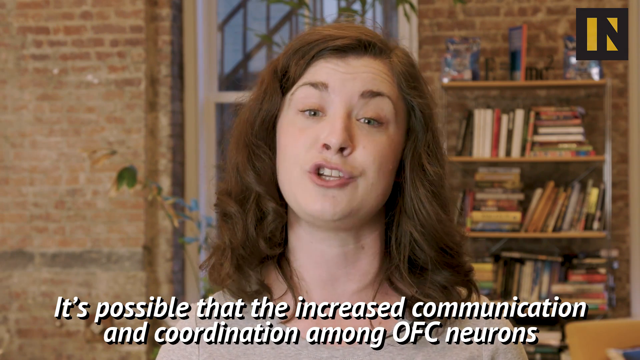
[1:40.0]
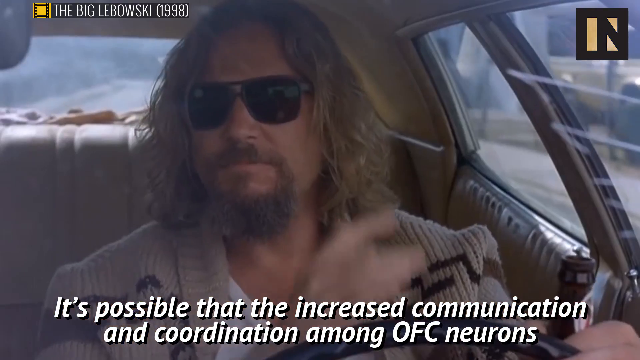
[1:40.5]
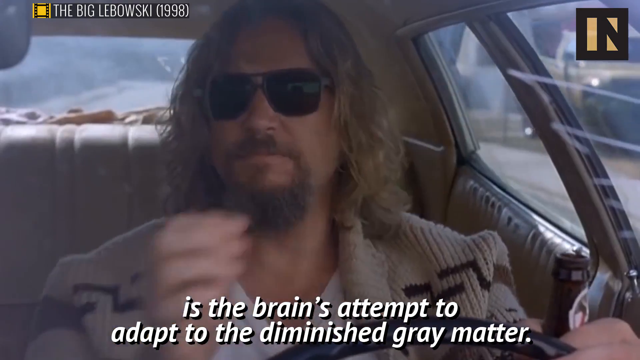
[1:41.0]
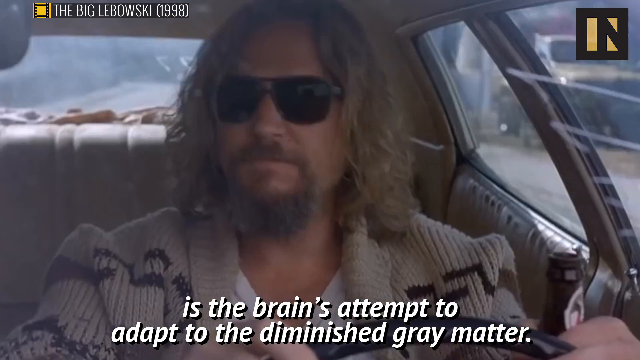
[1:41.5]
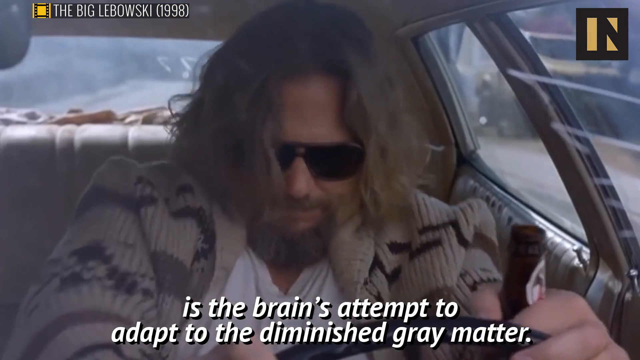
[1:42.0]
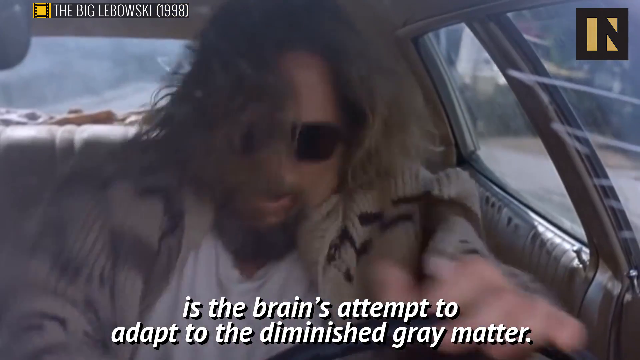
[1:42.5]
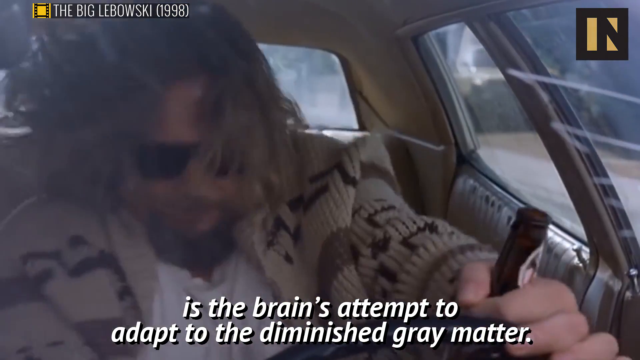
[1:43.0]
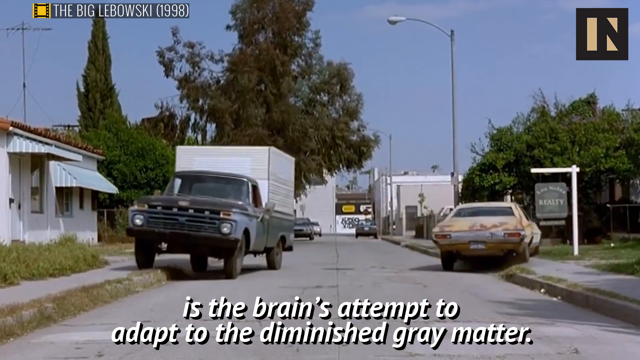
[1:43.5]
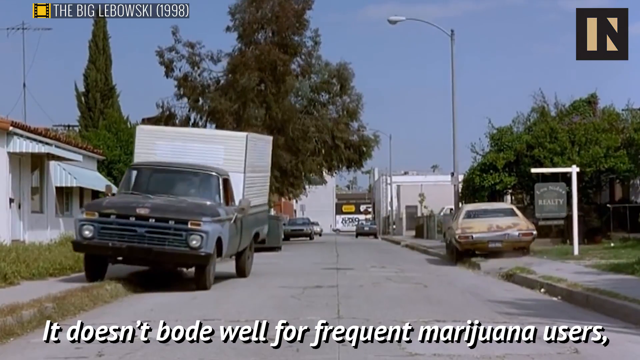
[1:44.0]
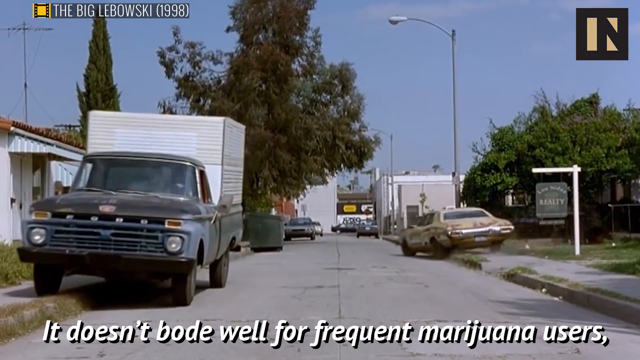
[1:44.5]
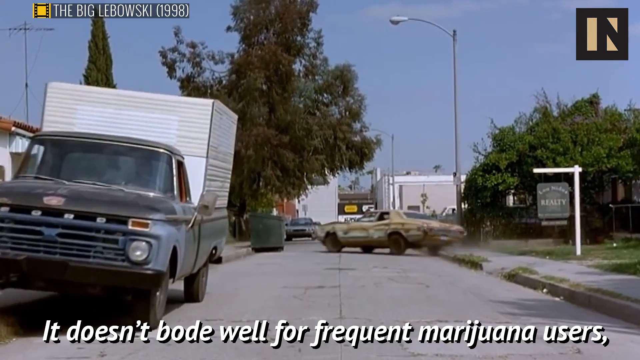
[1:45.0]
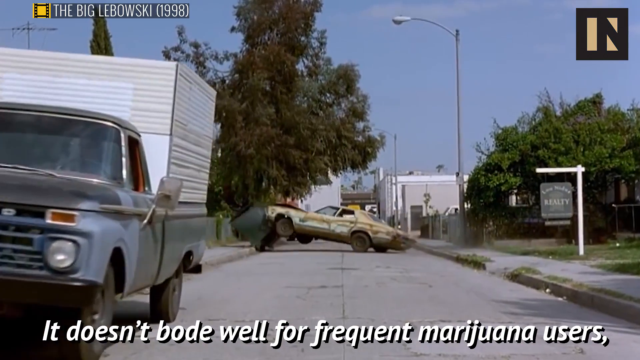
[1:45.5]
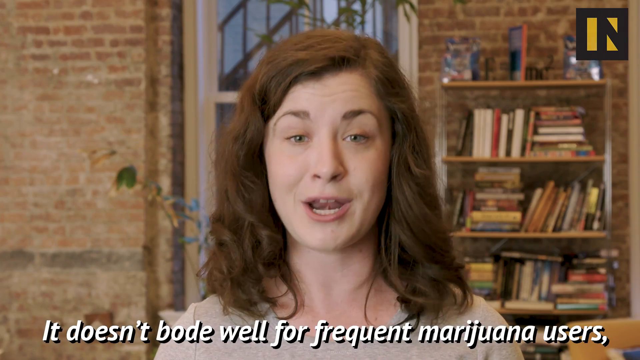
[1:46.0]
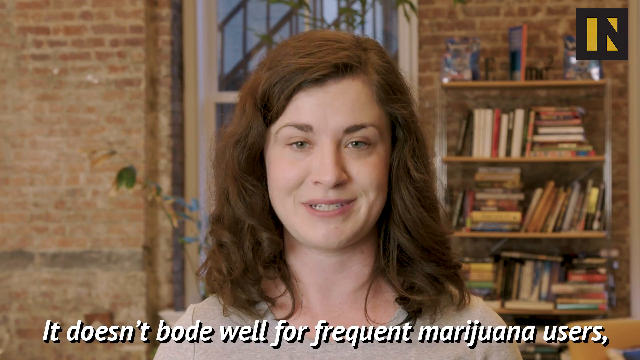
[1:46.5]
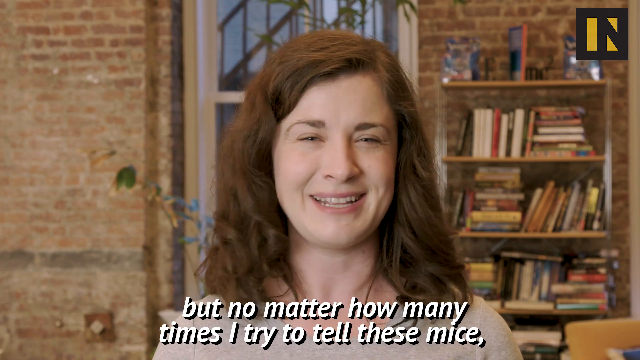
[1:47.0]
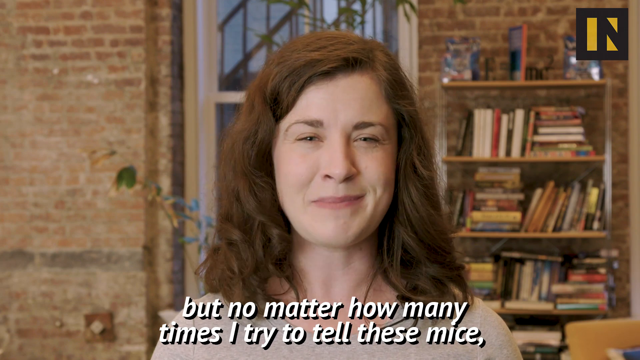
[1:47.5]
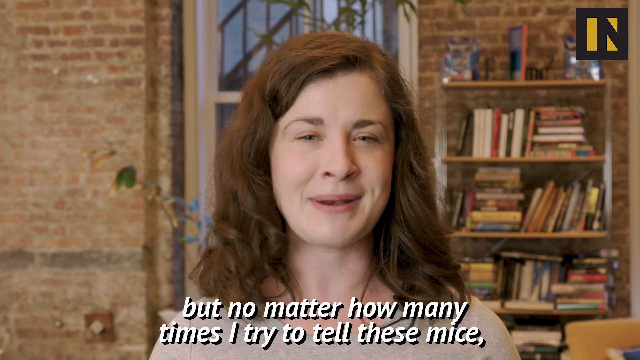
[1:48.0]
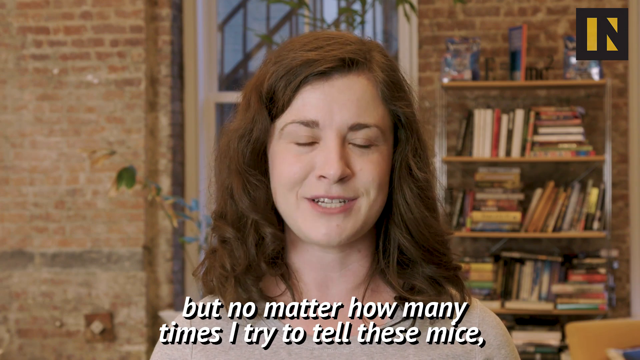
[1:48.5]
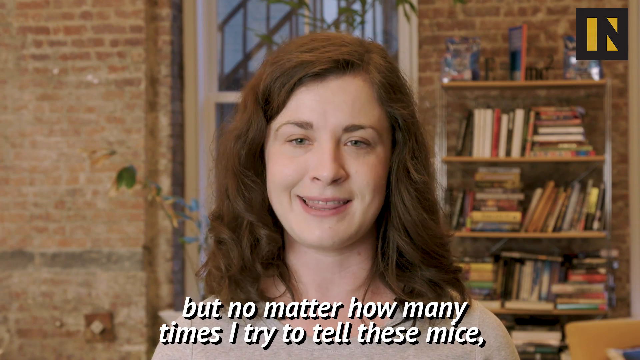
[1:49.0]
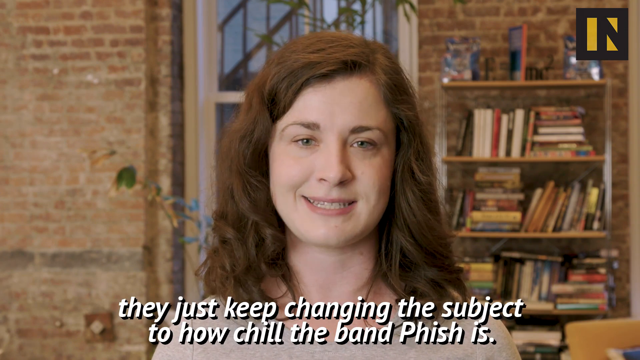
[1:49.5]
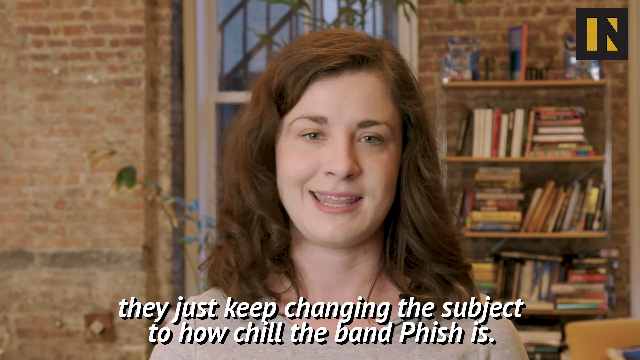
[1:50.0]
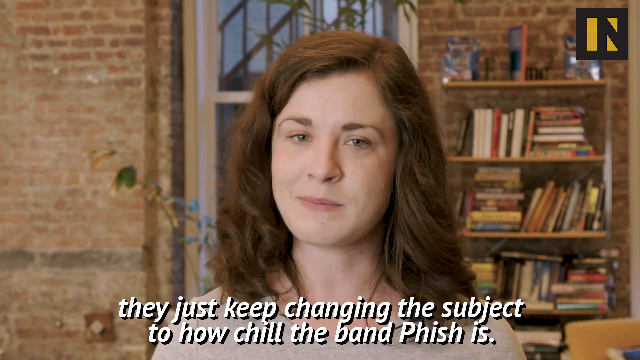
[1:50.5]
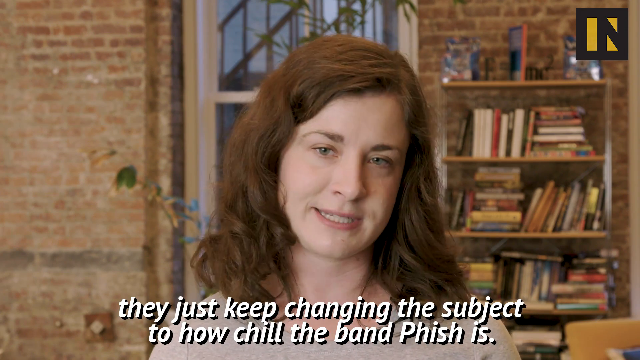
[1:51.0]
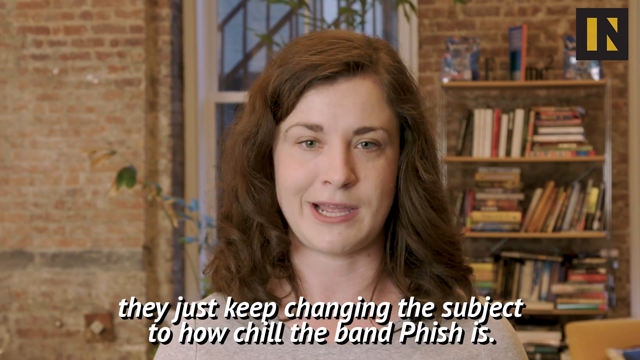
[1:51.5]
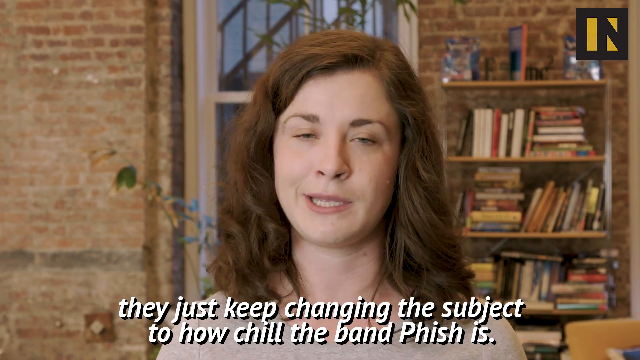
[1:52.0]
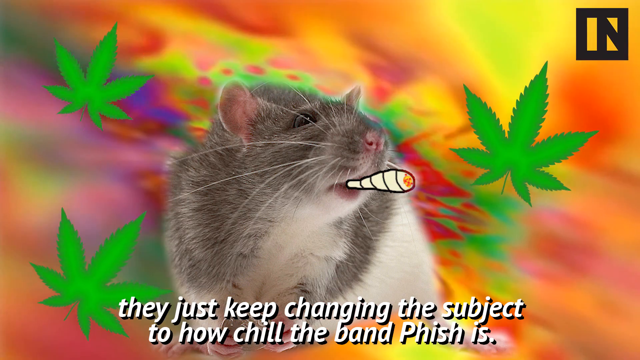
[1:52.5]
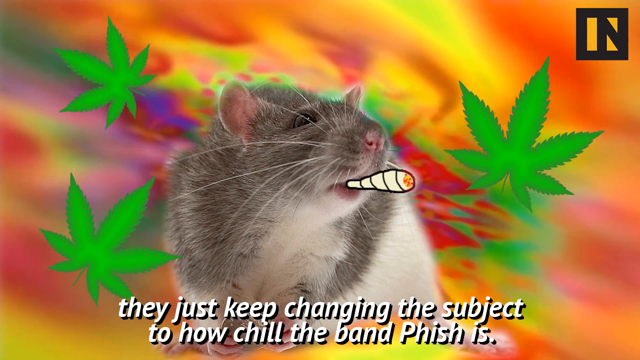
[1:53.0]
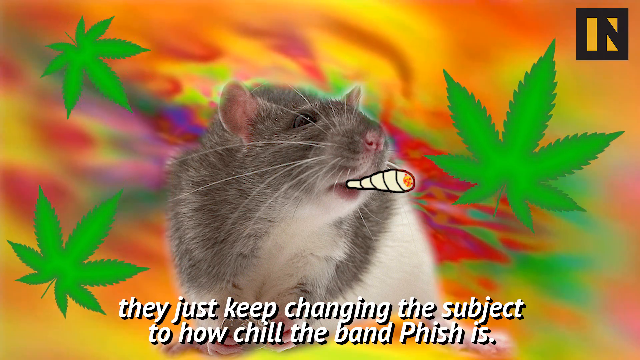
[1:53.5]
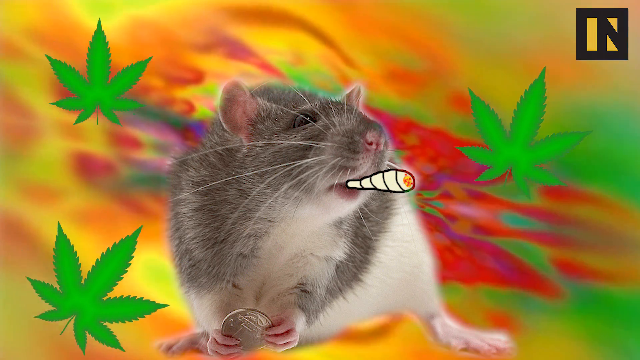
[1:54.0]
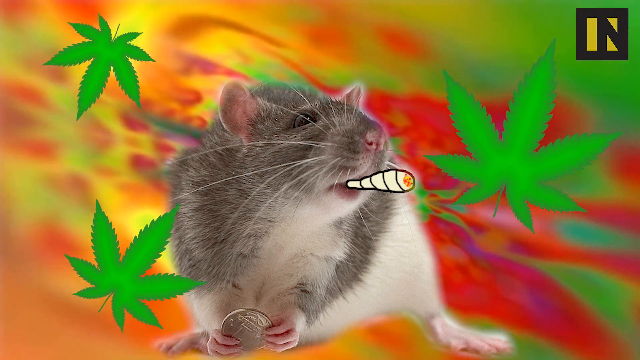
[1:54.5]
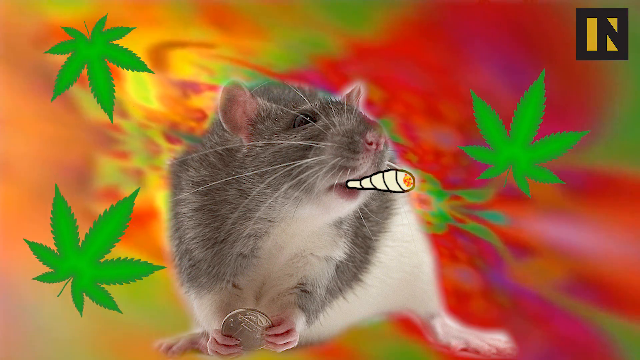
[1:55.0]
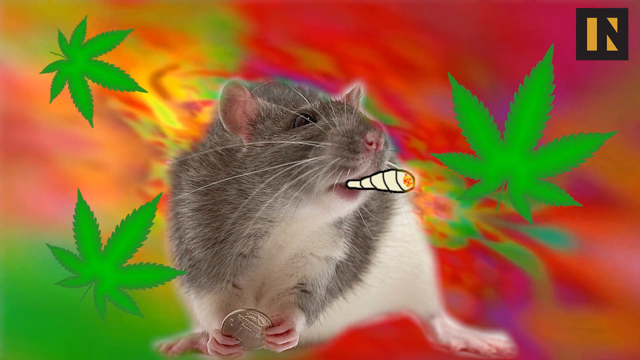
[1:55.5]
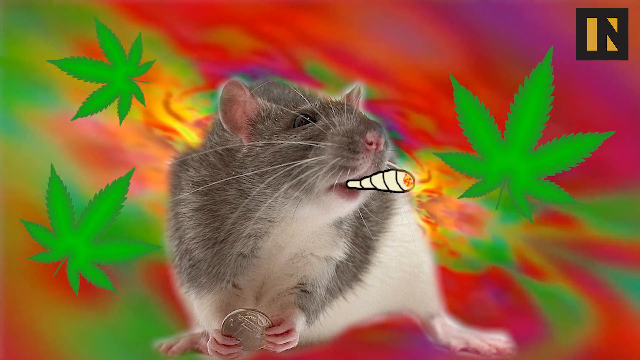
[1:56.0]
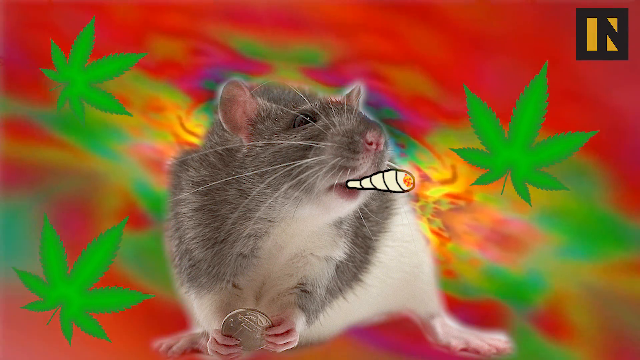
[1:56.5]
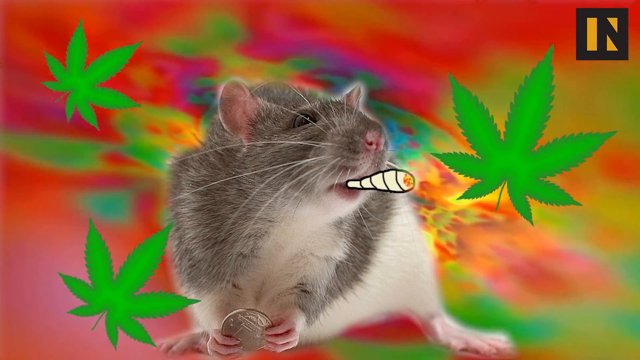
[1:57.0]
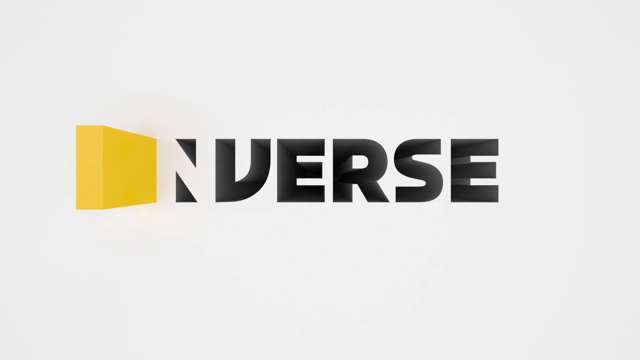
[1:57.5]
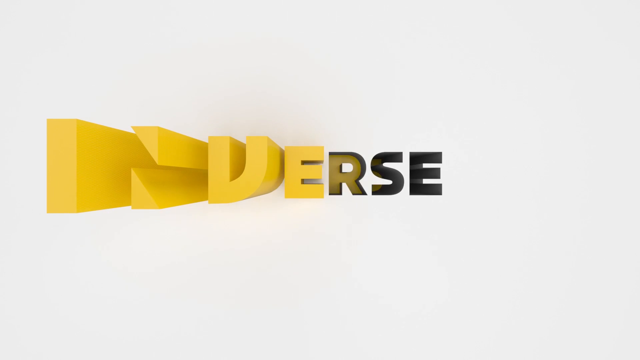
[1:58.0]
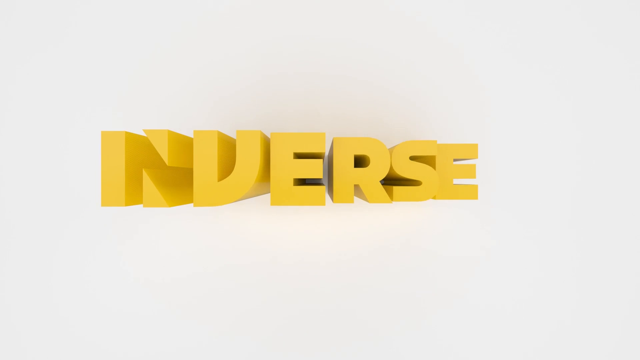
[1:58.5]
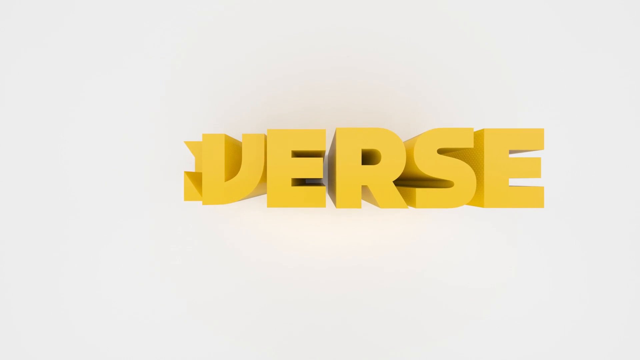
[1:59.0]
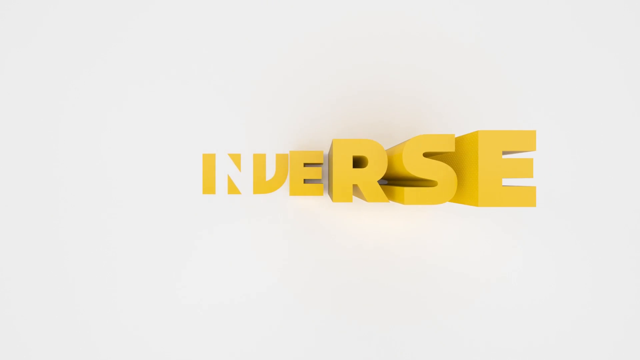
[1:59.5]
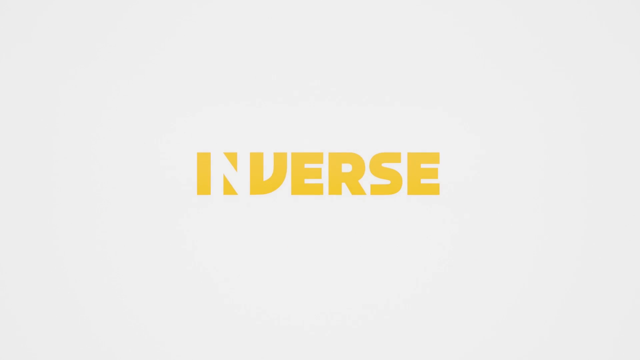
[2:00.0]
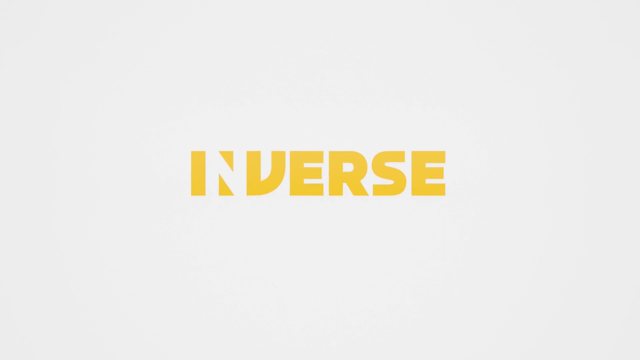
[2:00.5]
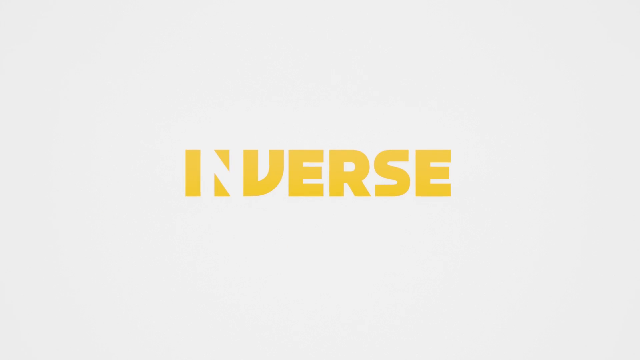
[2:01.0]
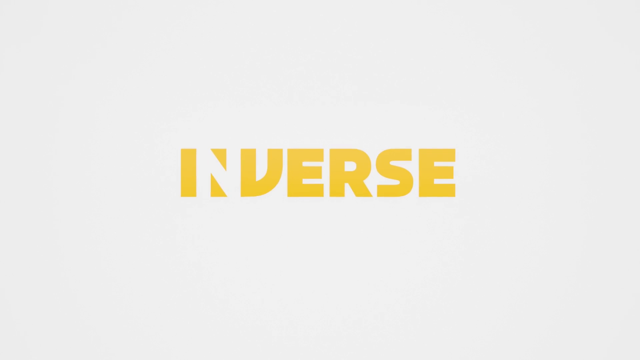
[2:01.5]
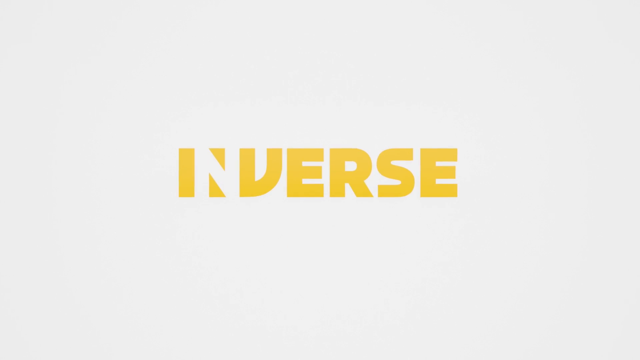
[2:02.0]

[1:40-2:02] The white host with shoulder-length brunette hair faces the camera, reading off the subtitles, with a bookshelf behind her to the right against a brick background. Through the doorway or window behind her there seem to be stairs leading upwards. White subtitles at the bottom read "it's possible that the increased communication and coordination among OEC neurons is the brain's attempt to adapt to the diminished gray matter." The video returns to the scene from The Big Lebowski (1998) with the Dude driving: he has dropped his joint between his legs and frantically searches for it as his car drives up over the curb, very nearly has an accident, and knocks into a trash can on the opposite side of the street. Back on the host facing the camera, the text reads "it doesn't bode well for frequent marijuana users but no matter how many times I try to tell these mice they just keep changing the subject to how chill the band phish is," apparently a joke by the host. A graphic then shows a mouse smoking a joint with marijuana leaves, with a moving, hazy tie-dye background behind him making him seem high. Finally, a white background shows black letters reading "inverse," which change from black to yellow as they appear on screen.